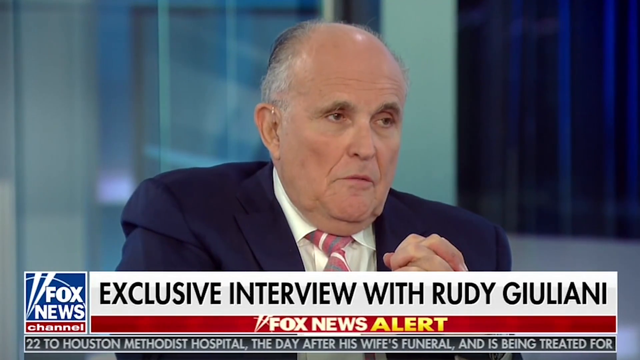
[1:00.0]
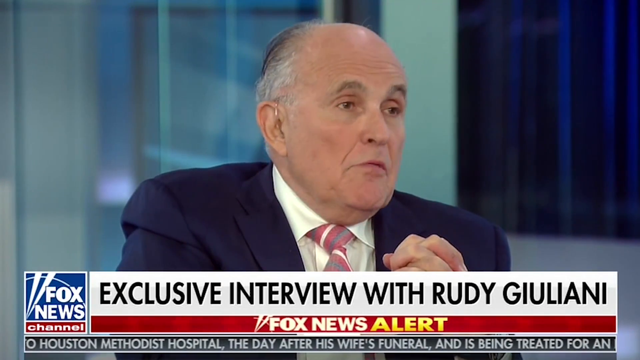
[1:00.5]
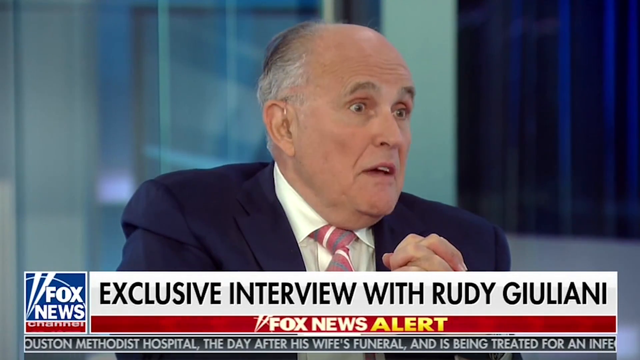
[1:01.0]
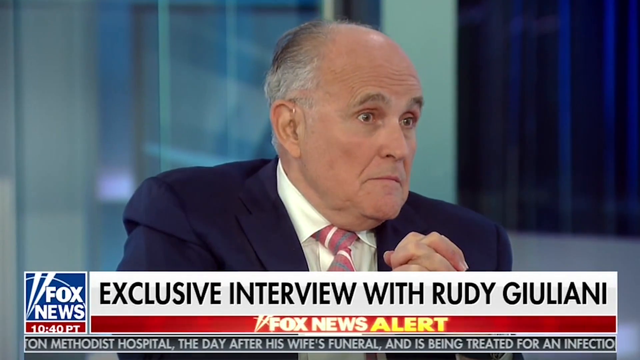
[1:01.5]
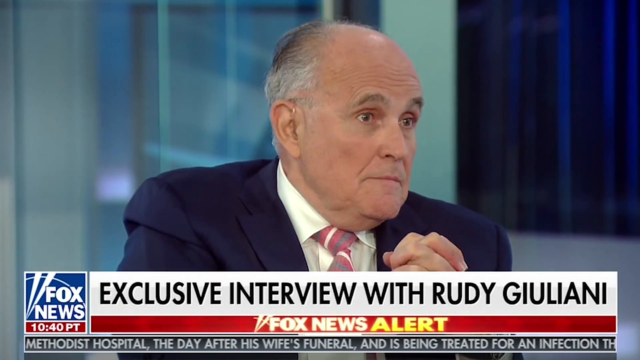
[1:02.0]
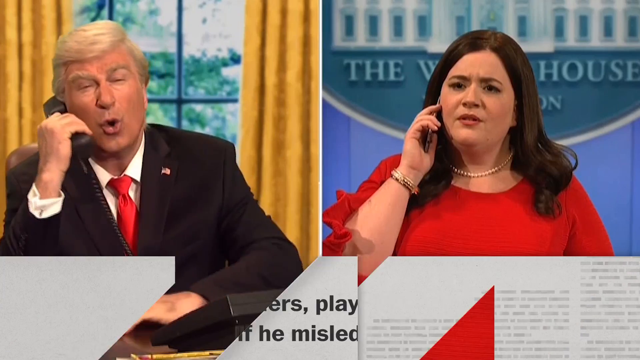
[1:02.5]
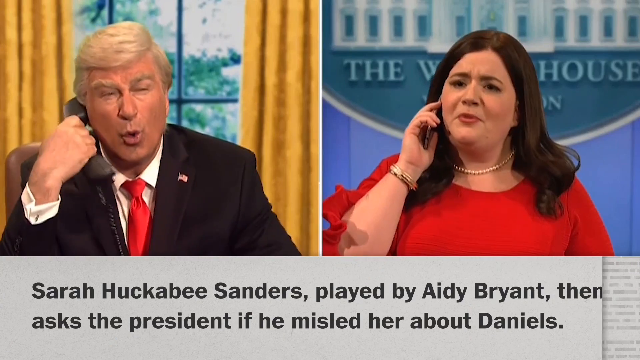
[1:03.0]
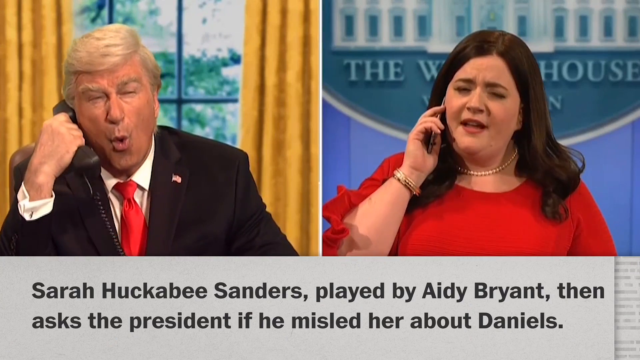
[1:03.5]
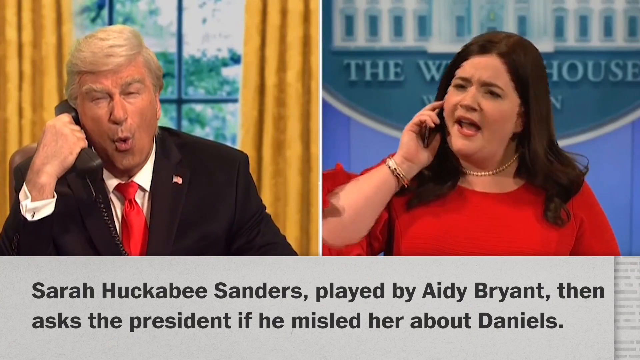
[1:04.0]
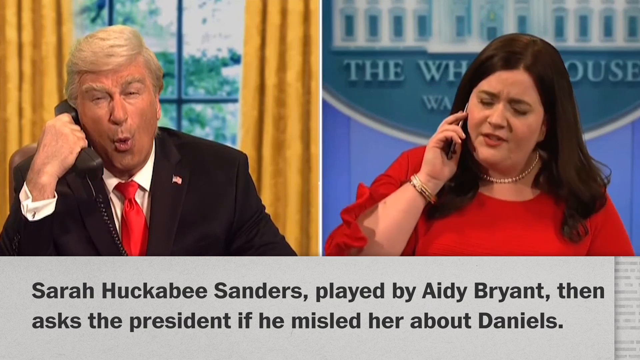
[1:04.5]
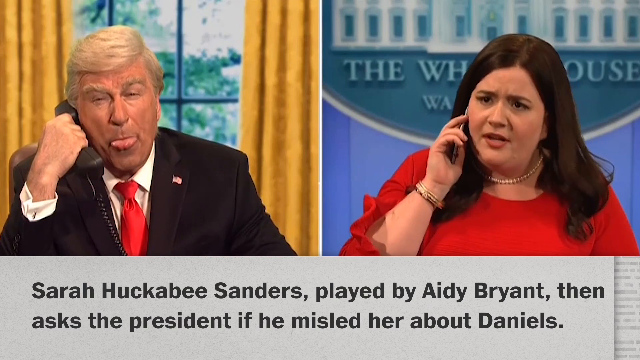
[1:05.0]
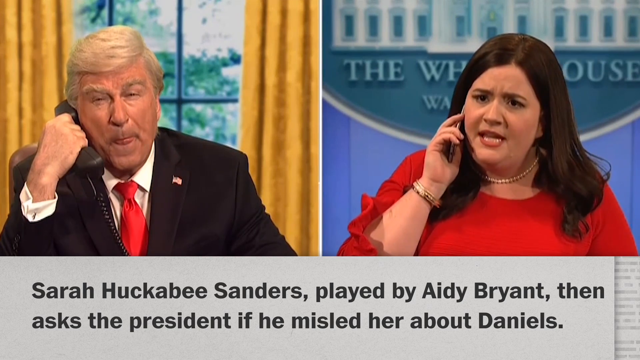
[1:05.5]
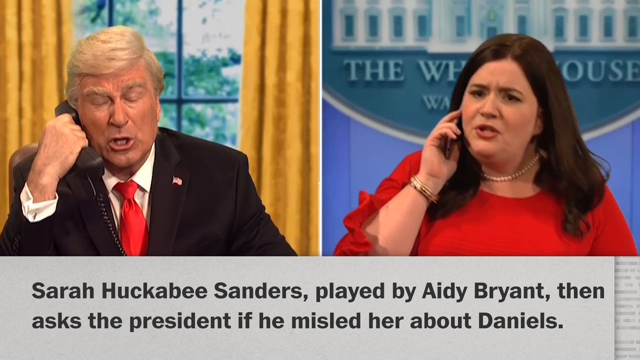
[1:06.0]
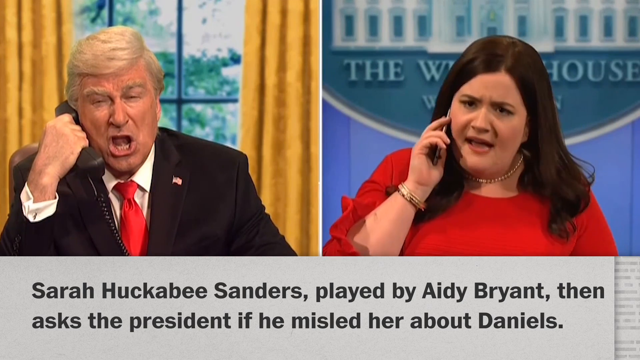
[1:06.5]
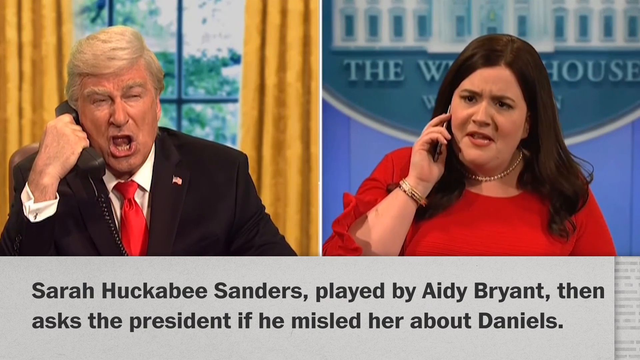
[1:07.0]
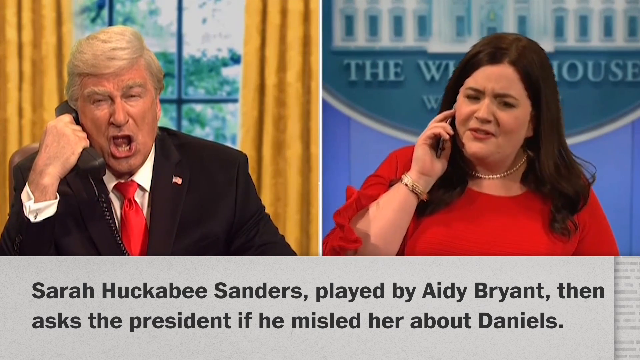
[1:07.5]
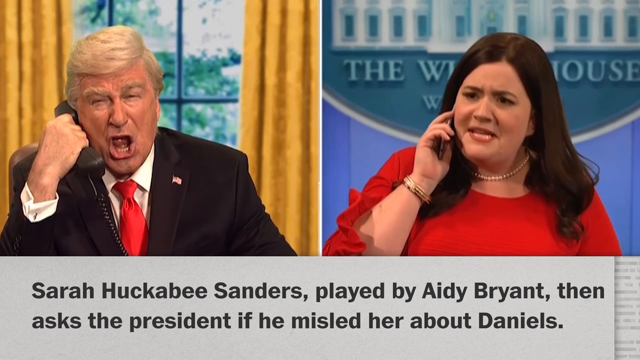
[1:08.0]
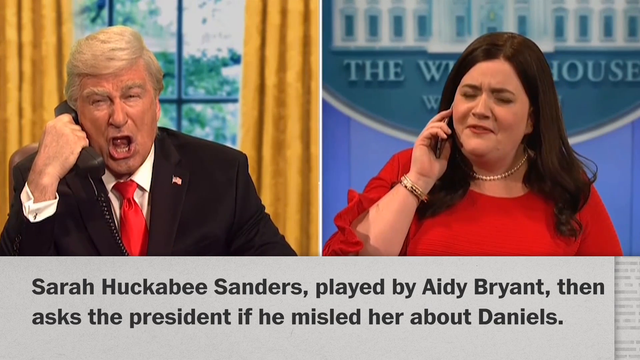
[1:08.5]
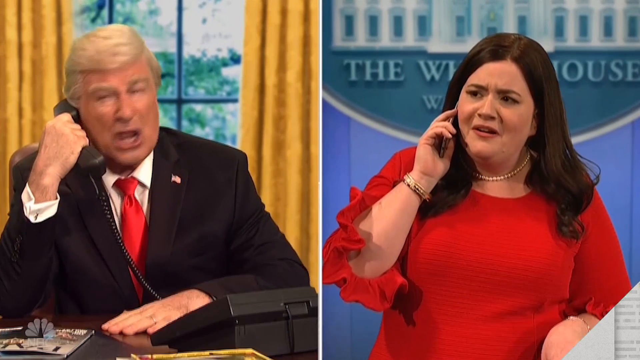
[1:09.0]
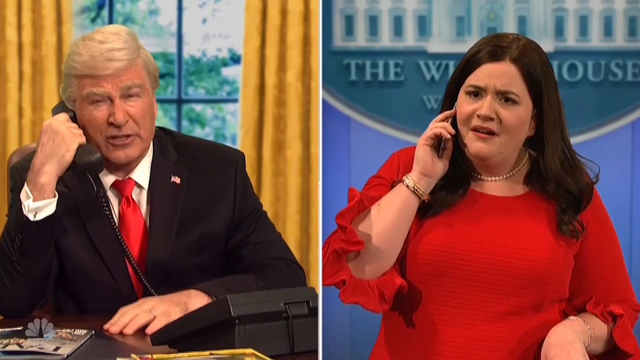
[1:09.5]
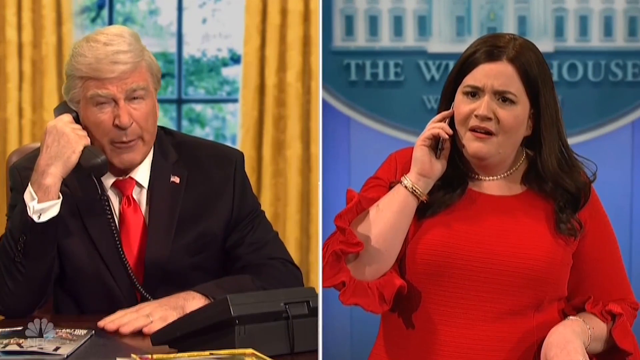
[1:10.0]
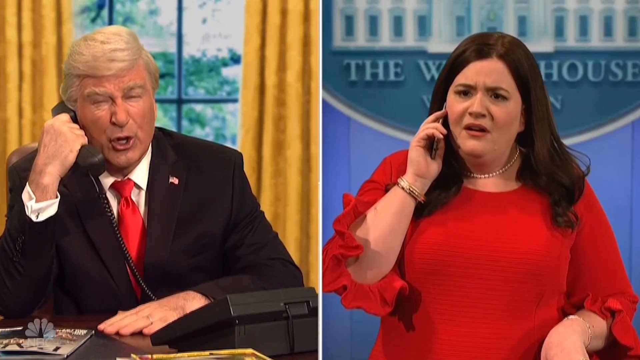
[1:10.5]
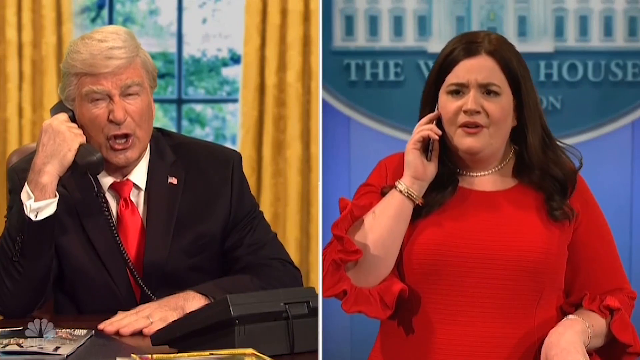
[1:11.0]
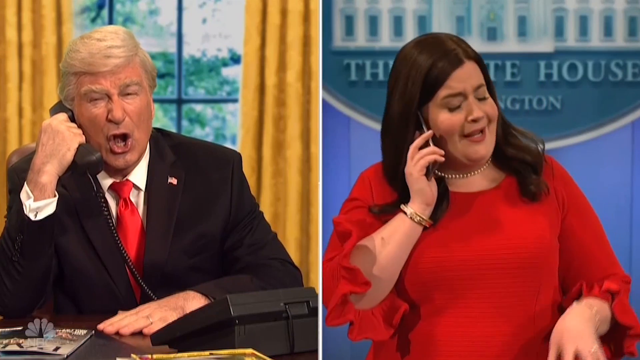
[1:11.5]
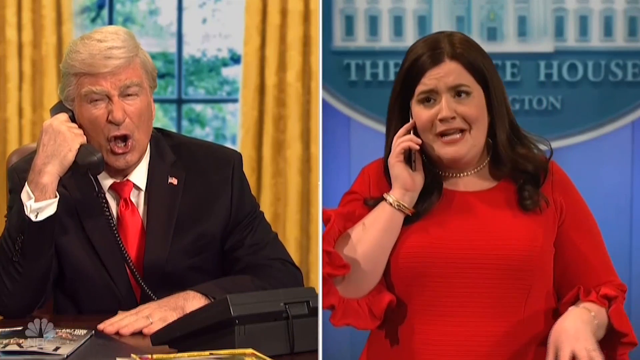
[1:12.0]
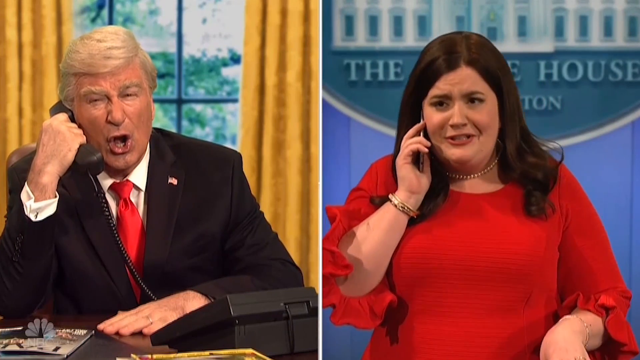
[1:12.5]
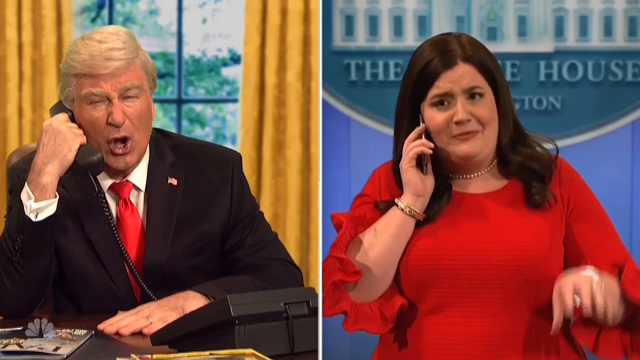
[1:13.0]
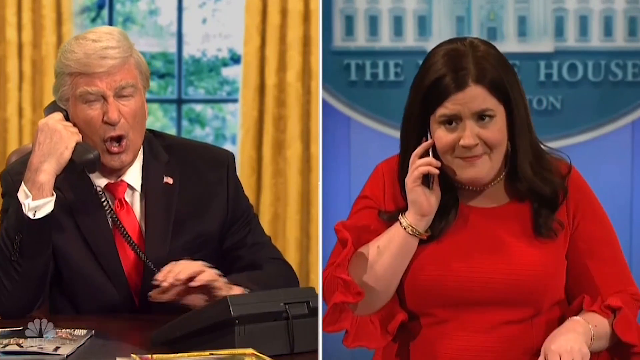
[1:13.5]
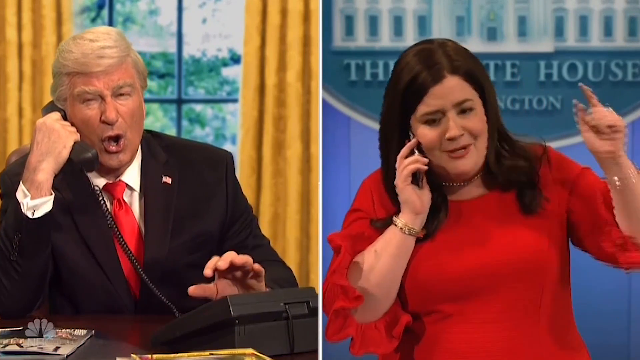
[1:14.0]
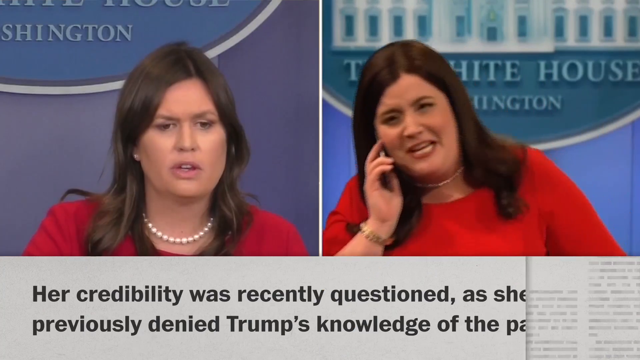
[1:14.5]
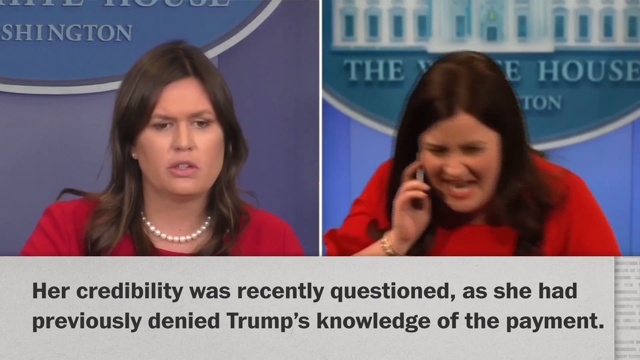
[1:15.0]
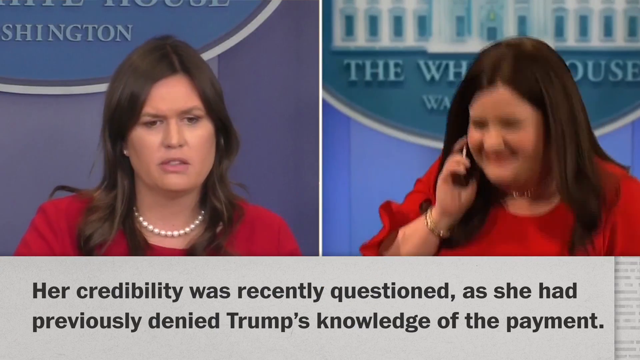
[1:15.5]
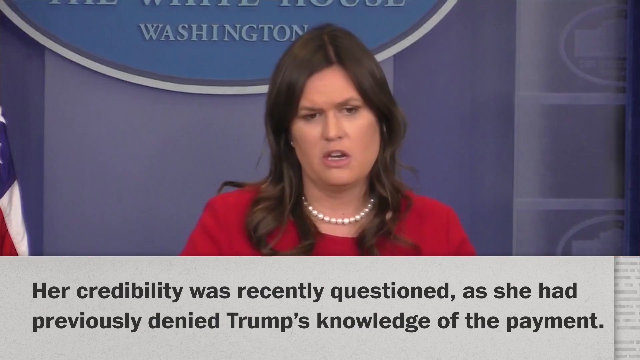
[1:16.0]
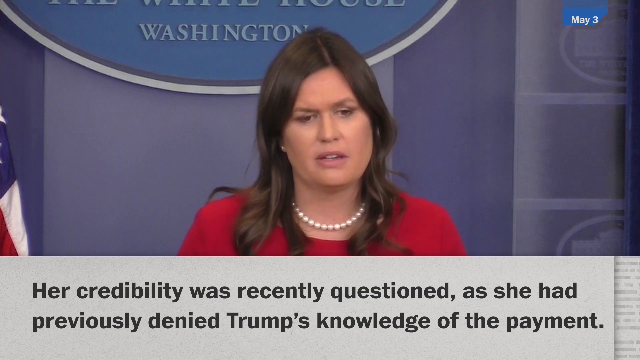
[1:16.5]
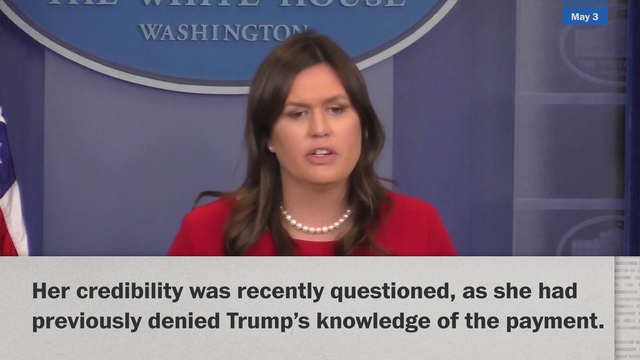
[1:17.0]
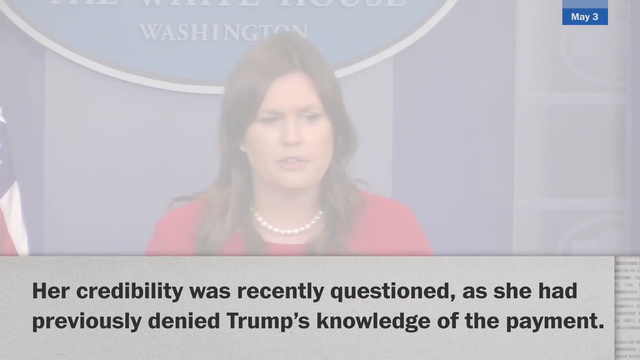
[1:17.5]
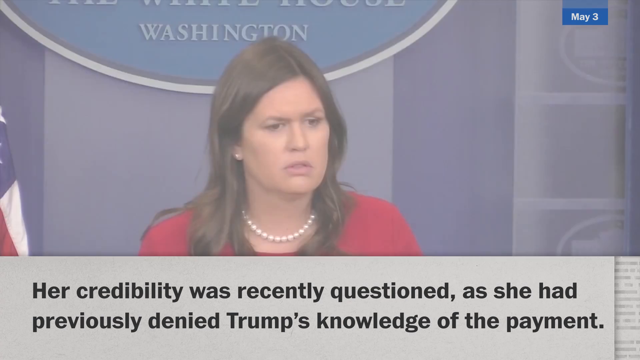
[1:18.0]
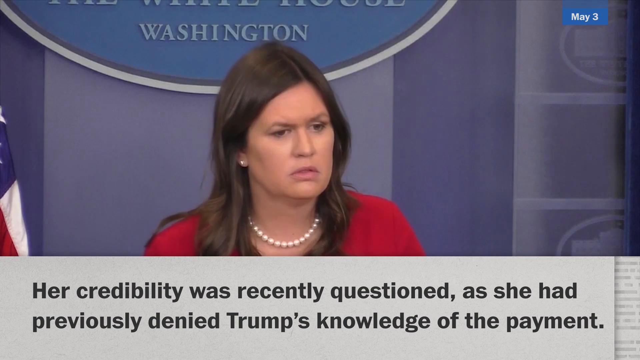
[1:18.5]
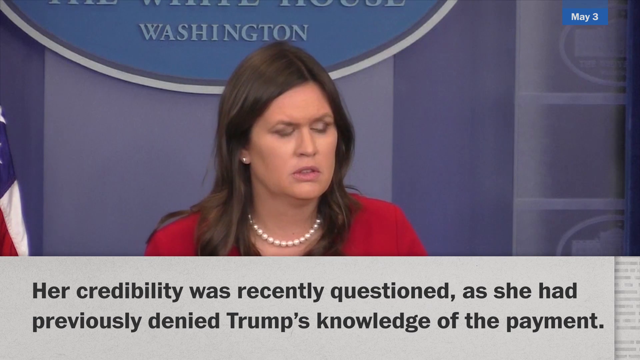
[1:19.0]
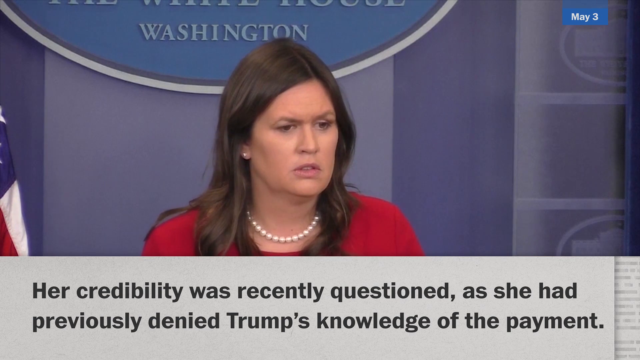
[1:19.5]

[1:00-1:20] A Fox News exclusive interview with Mayor Giuliani is shown, followed by a Saturday Night Live skit on a split screen between Trump, played by Alec Baldwin, and Sarah Huckabee Sanders. Trump is on the phone speaking to her and looks to be in his office. She wears a red dress with pearls and has brown hair, closely resembling the real person, and behind her the text says "the White House" in Washington. A real interview with Sarah Huckabee is then brought in, with text apparently saying something about her credibility. An explanation of the skits runs along the bottom, but only the very top sentence is visible. The actors are very animated.